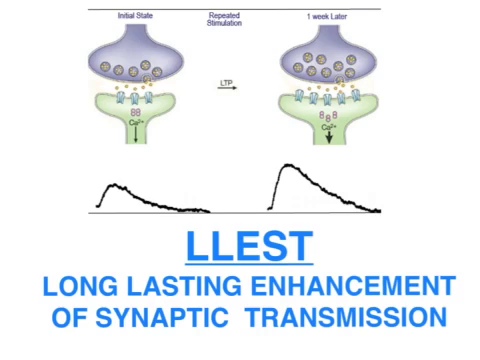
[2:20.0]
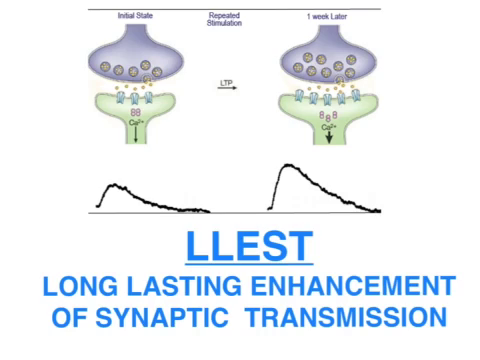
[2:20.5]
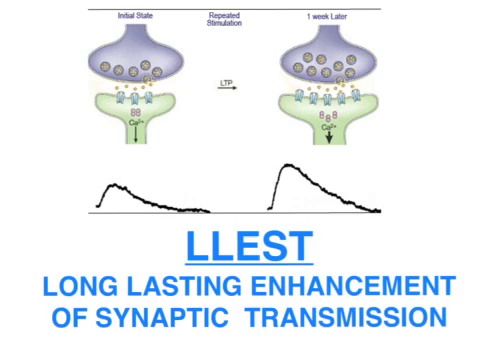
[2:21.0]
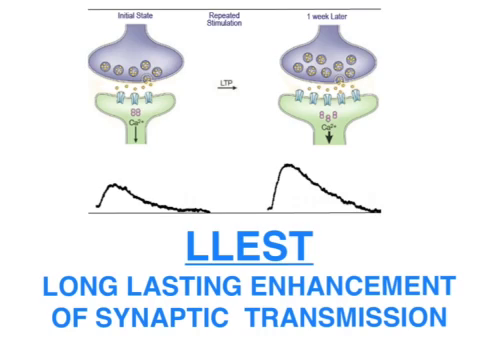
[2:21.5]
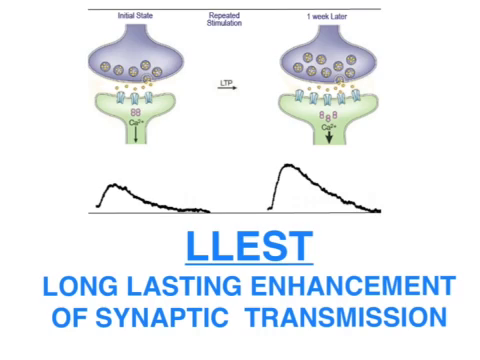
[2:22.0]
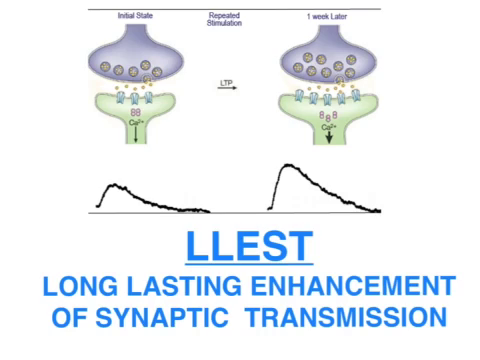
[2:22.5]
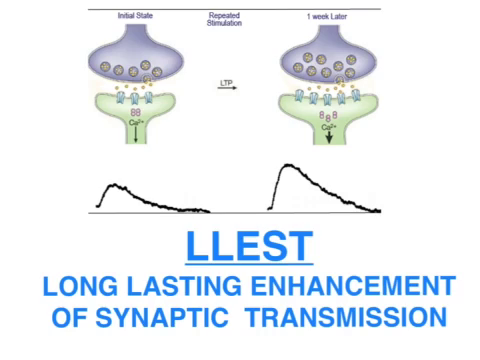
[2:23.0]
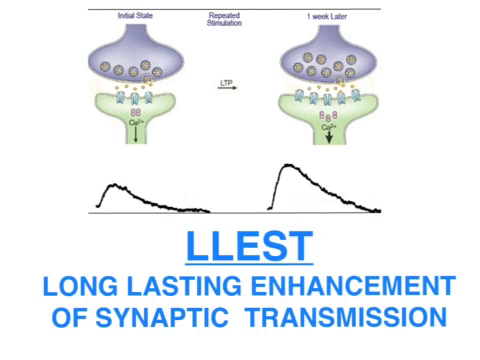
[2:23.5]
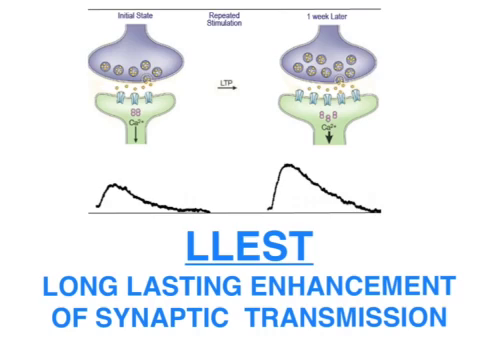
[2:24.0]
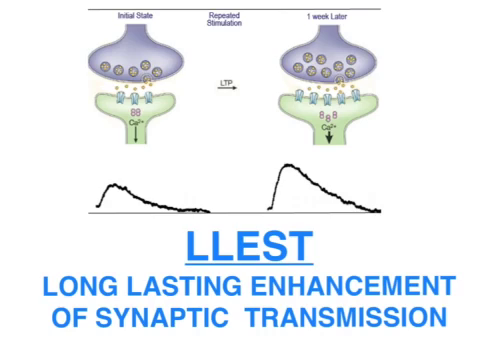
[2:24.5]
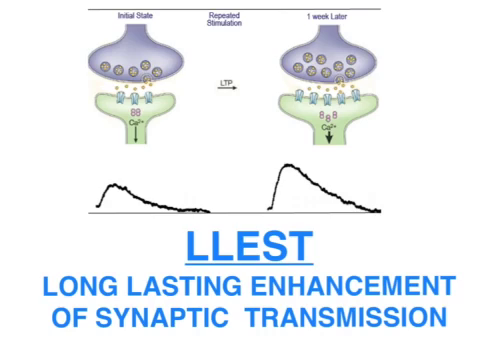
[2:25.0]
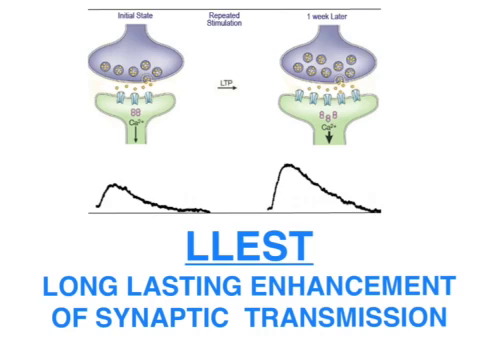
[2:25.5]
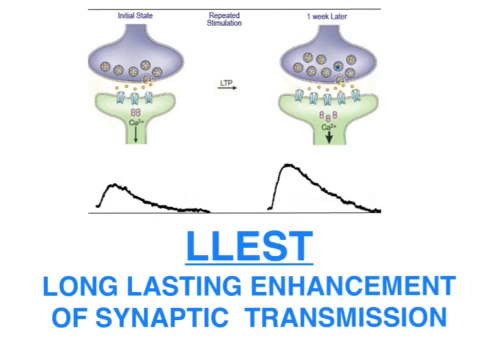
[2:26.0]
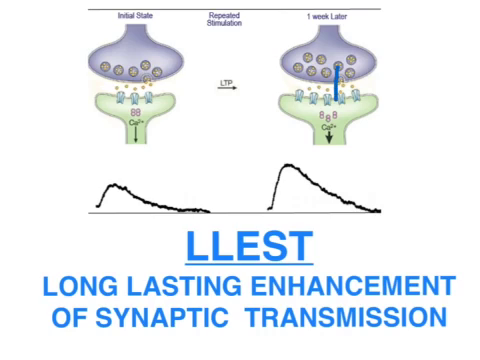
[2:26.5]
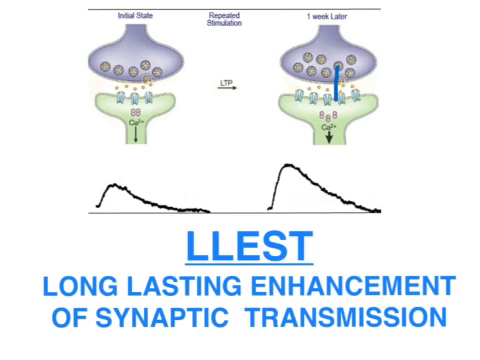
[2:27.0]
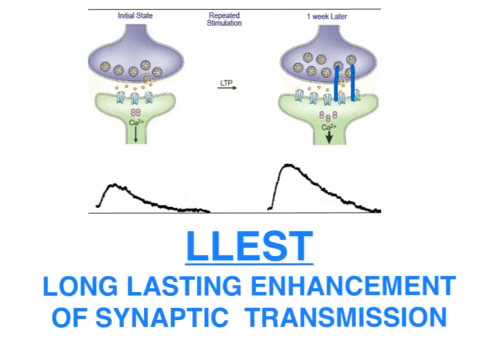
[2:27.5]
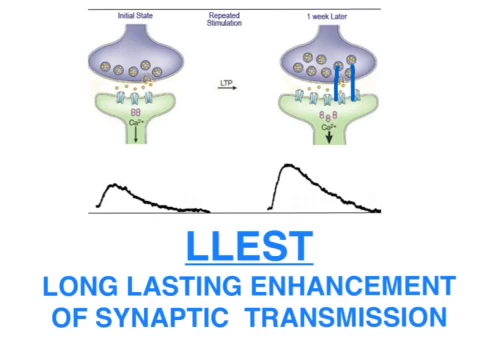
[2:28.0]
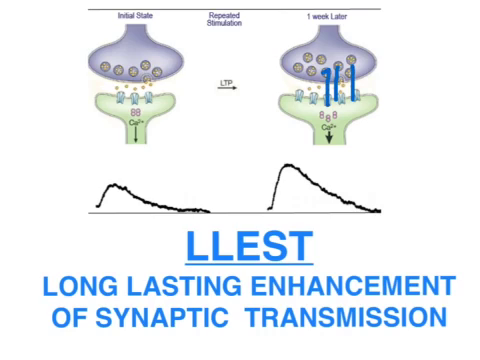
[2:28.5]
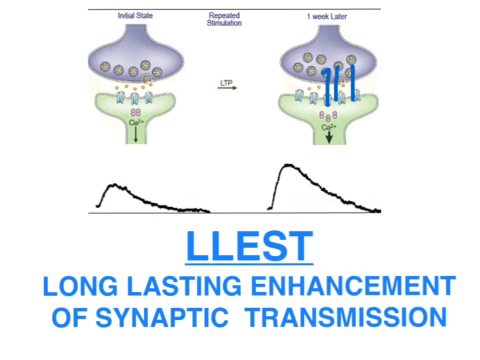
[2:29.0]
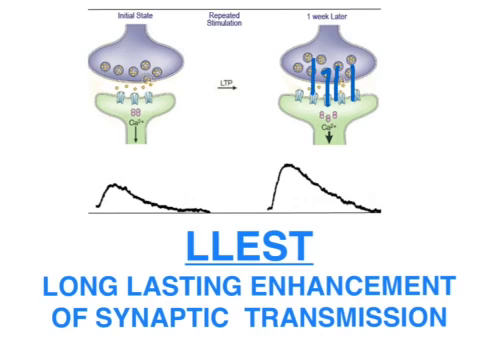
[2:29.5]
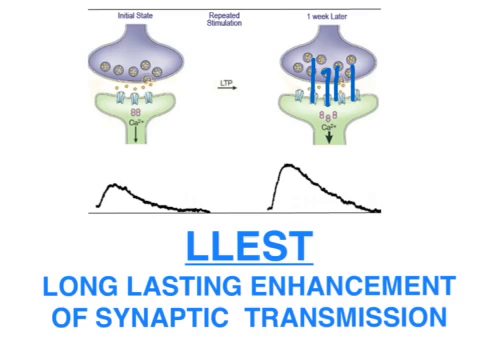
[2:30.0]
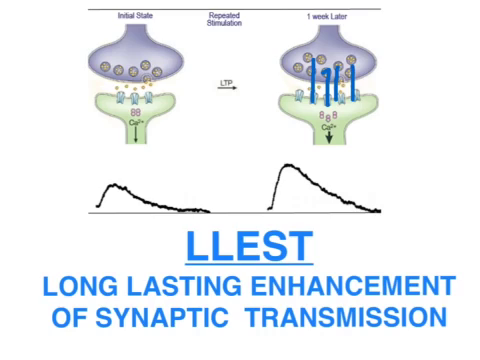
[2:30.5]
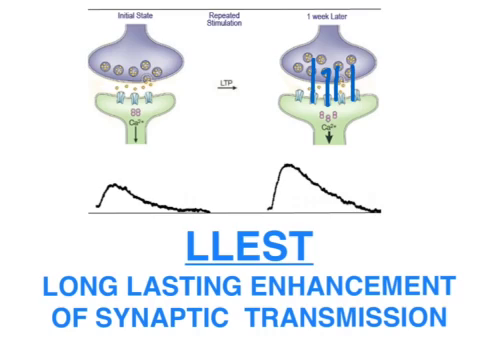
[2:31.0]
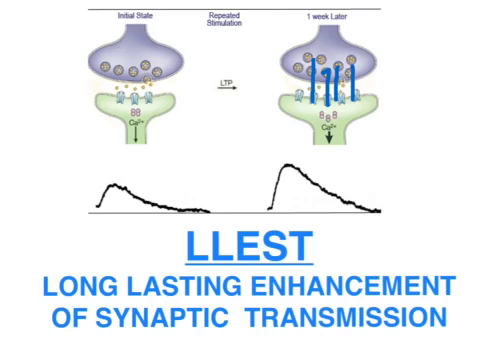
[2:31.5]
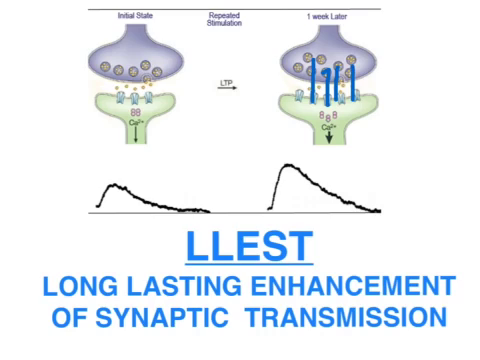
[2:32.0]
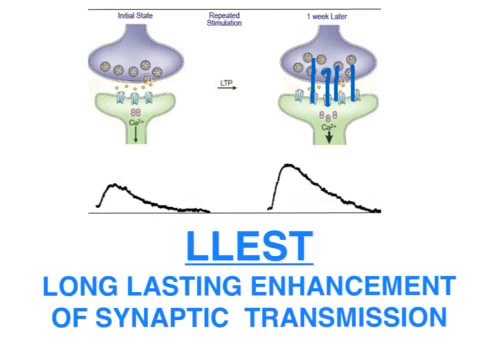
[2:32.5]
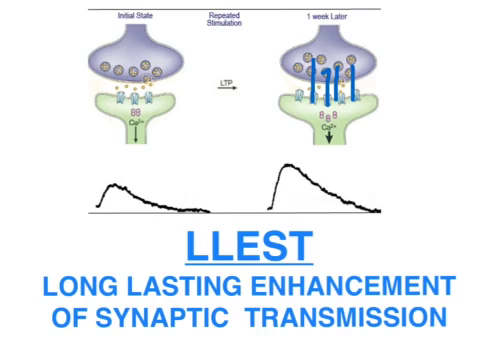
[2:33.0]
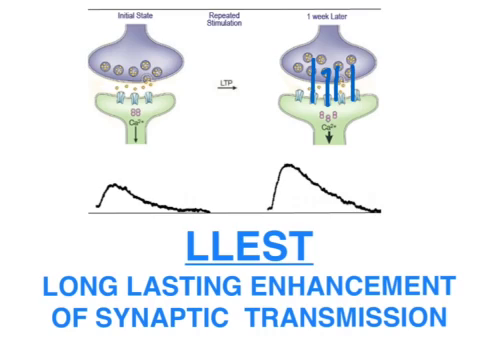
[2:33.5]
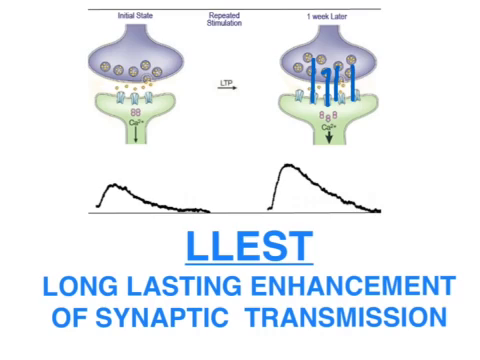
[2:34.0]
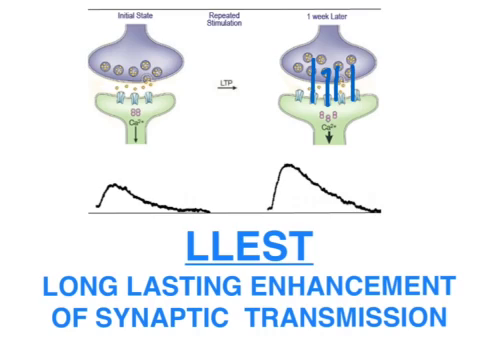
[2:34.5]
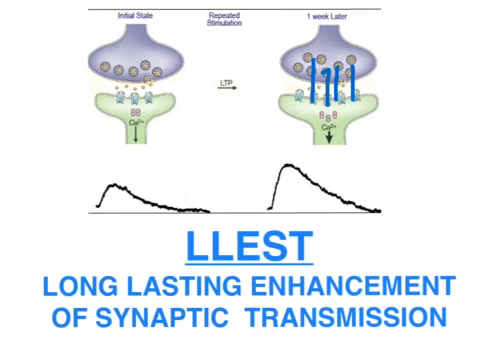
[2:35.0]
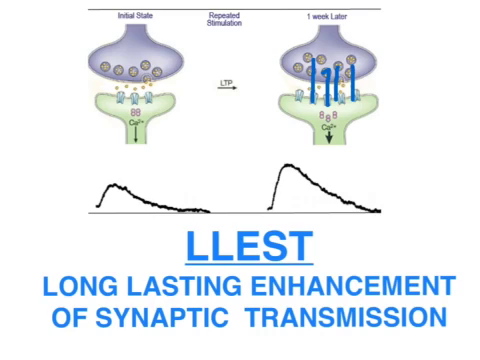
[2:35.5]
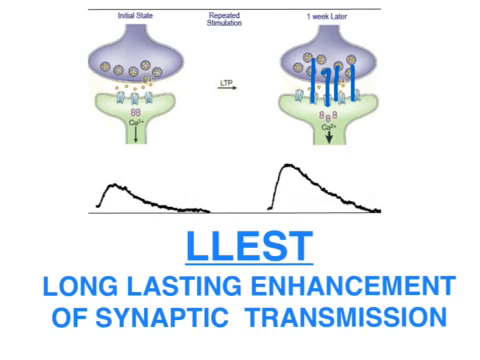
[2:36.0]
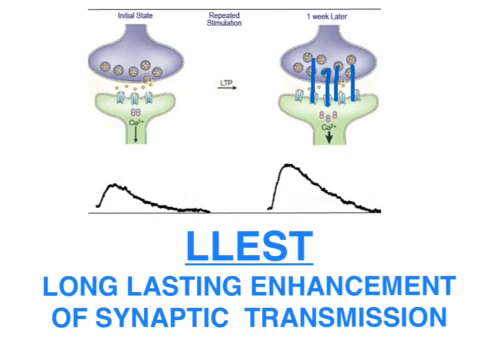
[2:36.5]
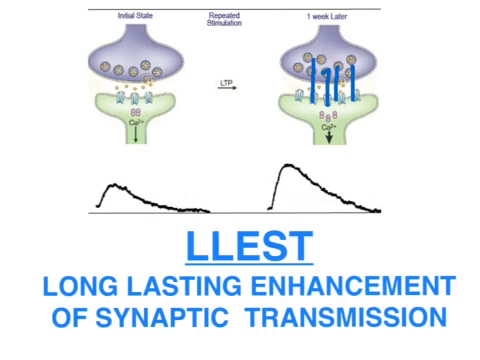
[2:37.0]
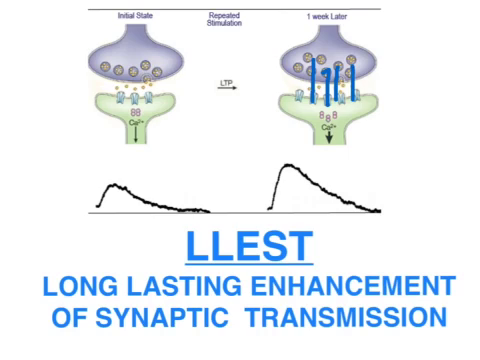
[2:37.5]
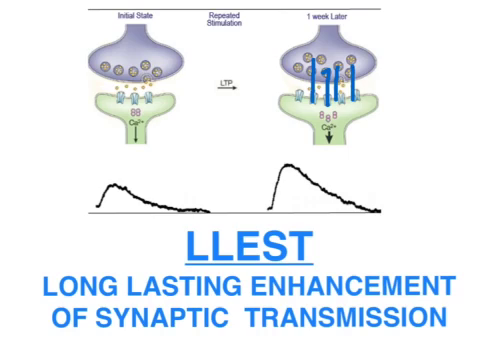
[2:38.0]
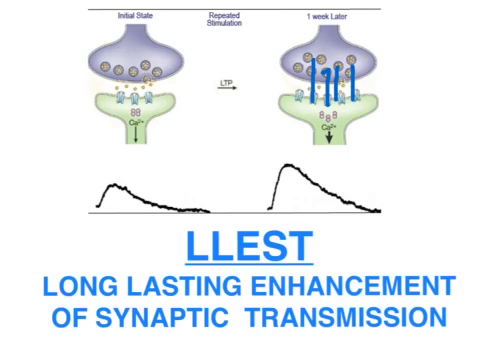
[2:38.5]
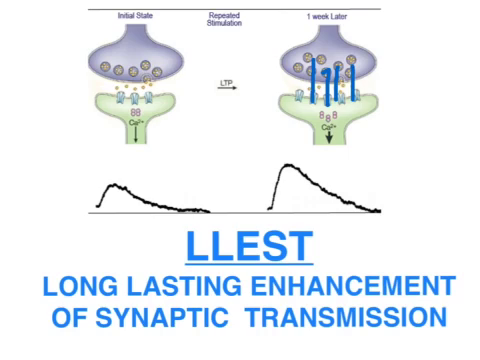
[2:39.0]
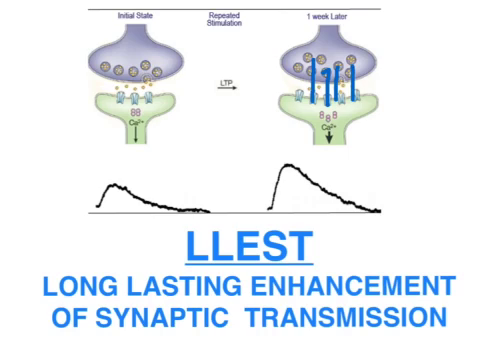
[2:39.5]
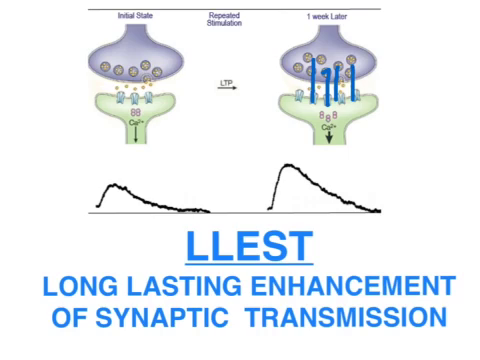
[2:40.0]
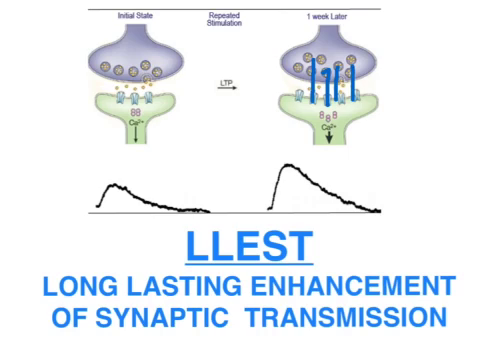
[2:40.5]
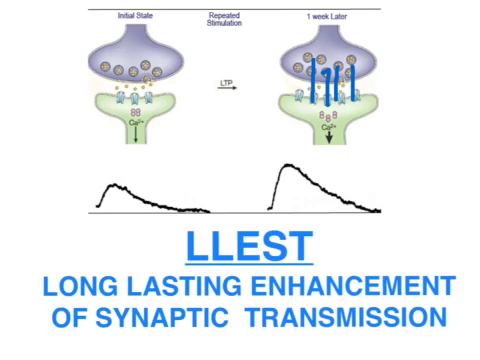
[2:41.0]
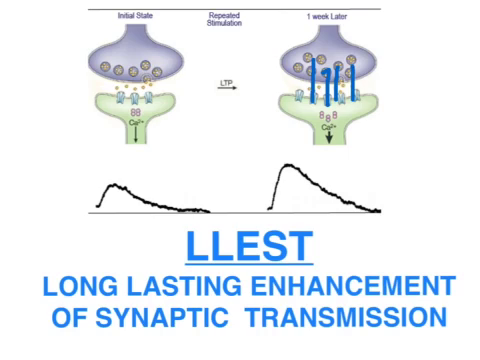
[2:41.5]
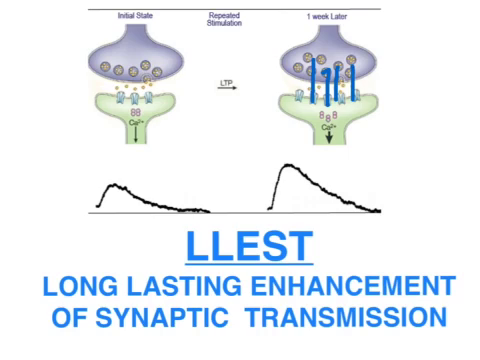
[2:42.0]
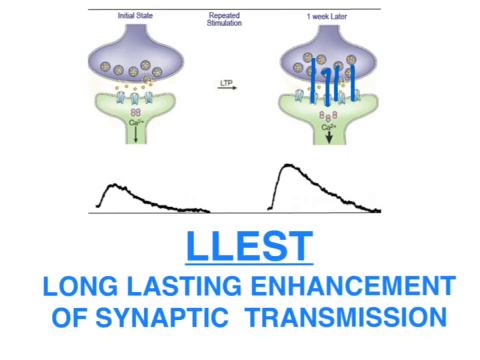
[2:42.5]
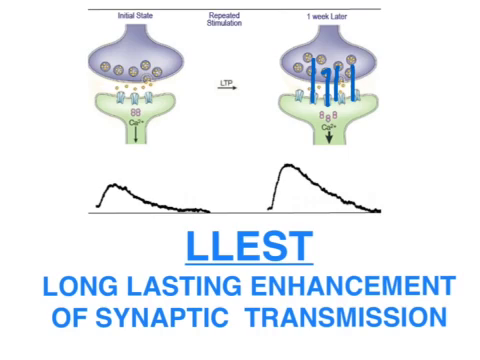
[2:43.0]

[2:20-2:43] An illustration at the top shows two bulbous gray shapes above two green shapes. The green shapes have a slight curve that looks as though they would fit the bulge of the gray tops. The left says "initial state," the right says "one week later," and at the top in the middle is "repeated stimulation," with the letters "LTP" below it above an arrow pointing right. The gray shapes contain a number of smaller circles, and the green shapes contain receptor areas and arrows pointing downward, indicating direction. On the right side, a blue pen eventually begins to outline movement from the round shapes in the gray bulb down to the green one. Below are two black graph marks: the left one rises slightly before going down, and the right one rises greatly and then dips down more sharply. Beneath them it says "LLEST, long-lasting enhancement of synaptic transmission." More blue pen marks come from the circles on the right-hand side down to the left.